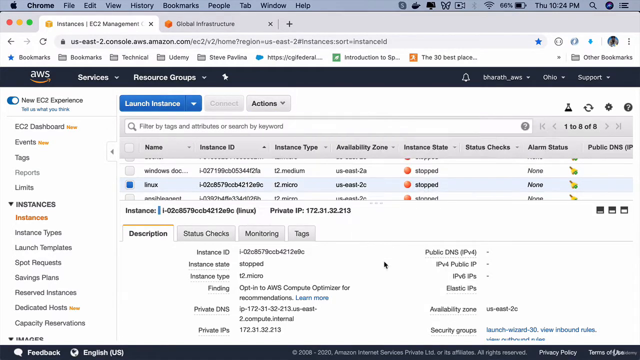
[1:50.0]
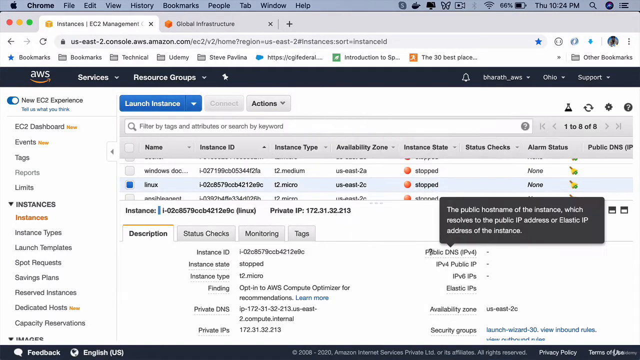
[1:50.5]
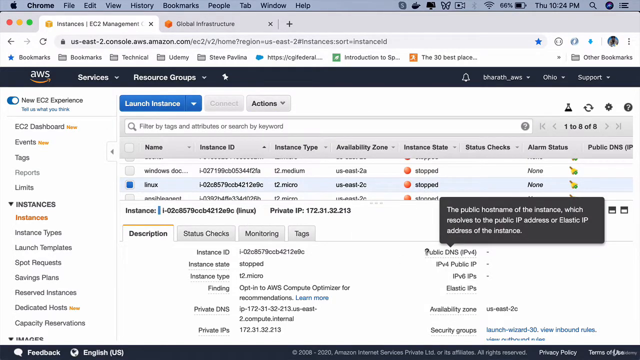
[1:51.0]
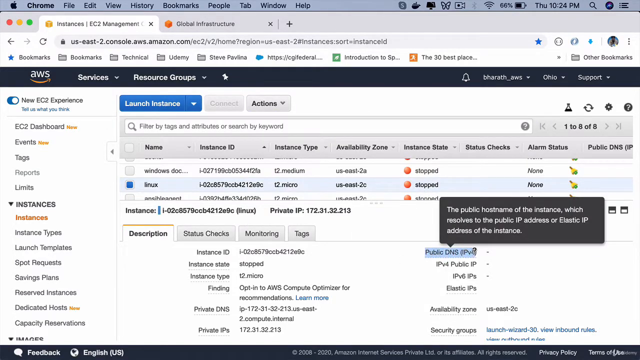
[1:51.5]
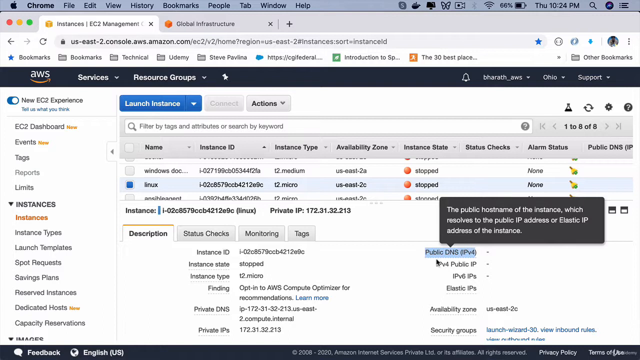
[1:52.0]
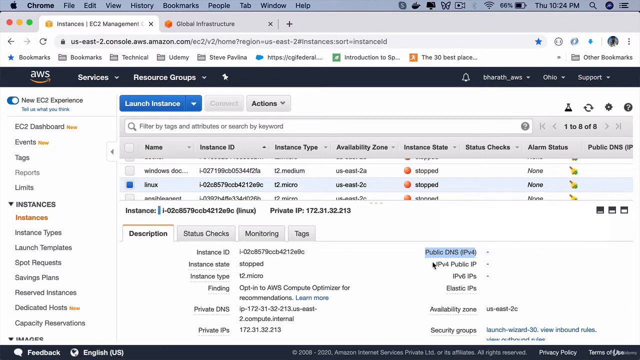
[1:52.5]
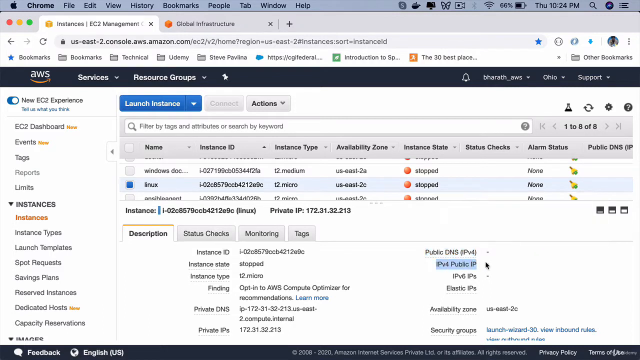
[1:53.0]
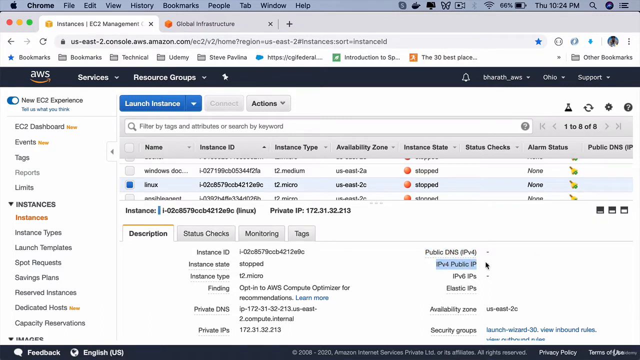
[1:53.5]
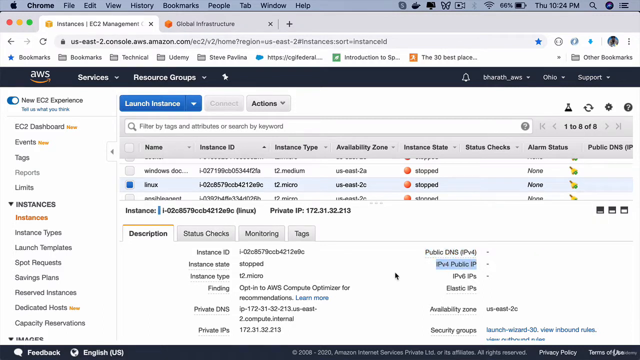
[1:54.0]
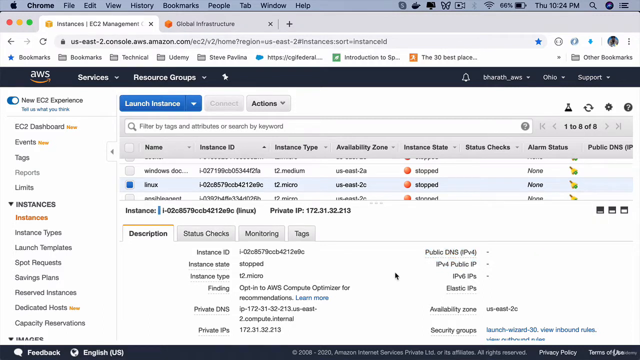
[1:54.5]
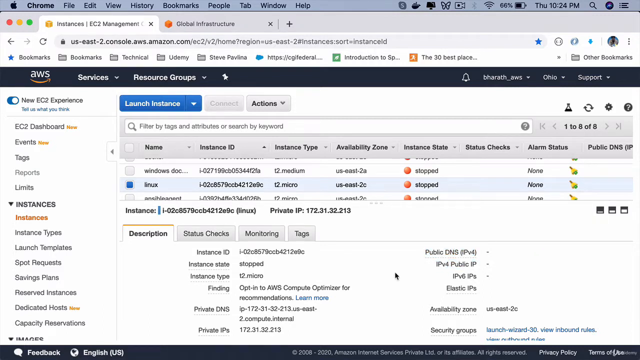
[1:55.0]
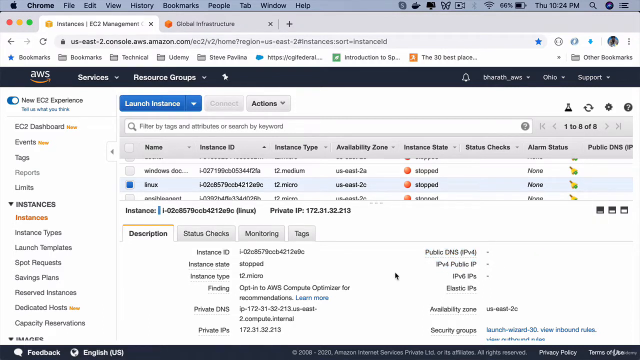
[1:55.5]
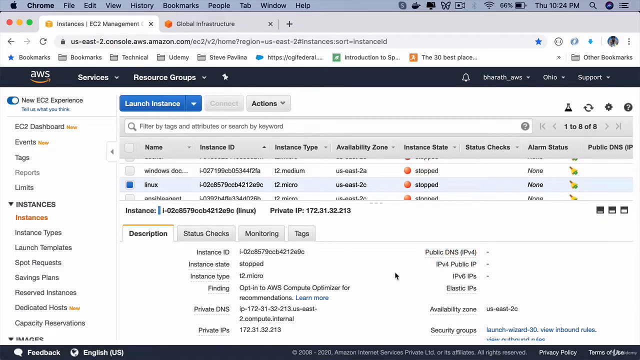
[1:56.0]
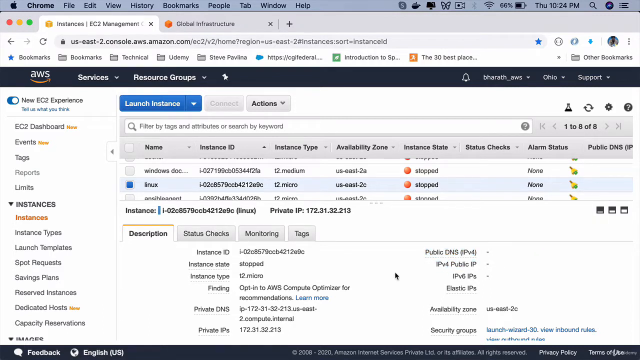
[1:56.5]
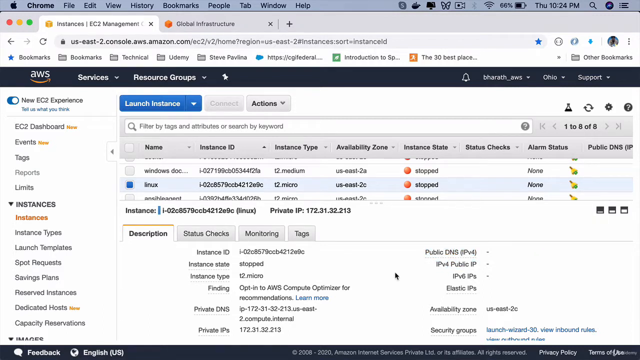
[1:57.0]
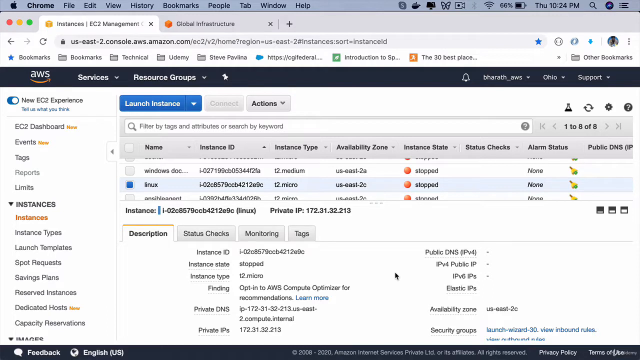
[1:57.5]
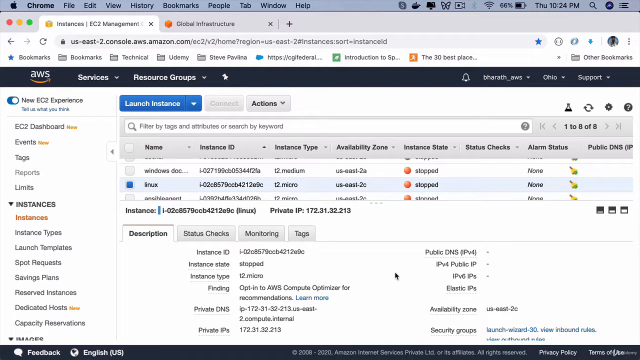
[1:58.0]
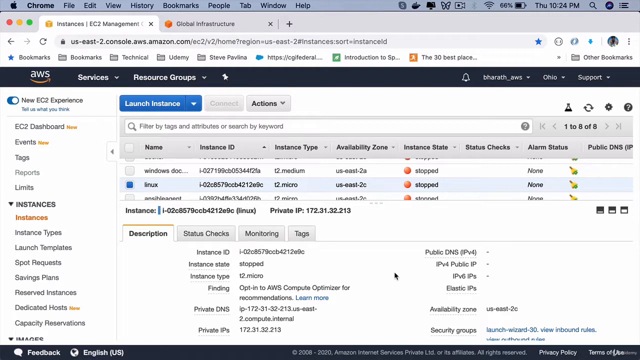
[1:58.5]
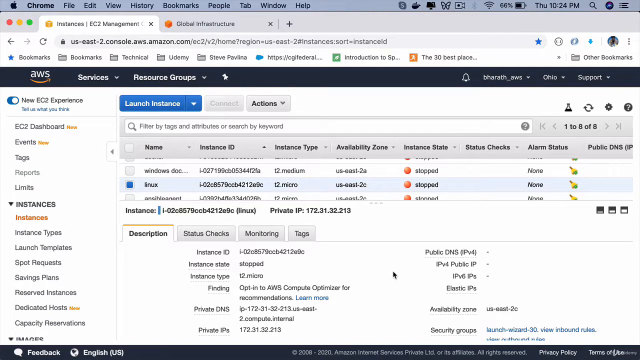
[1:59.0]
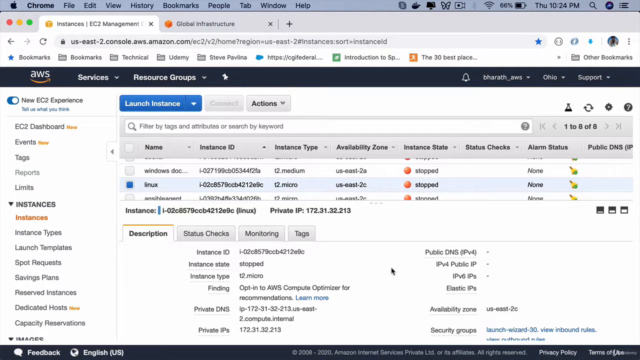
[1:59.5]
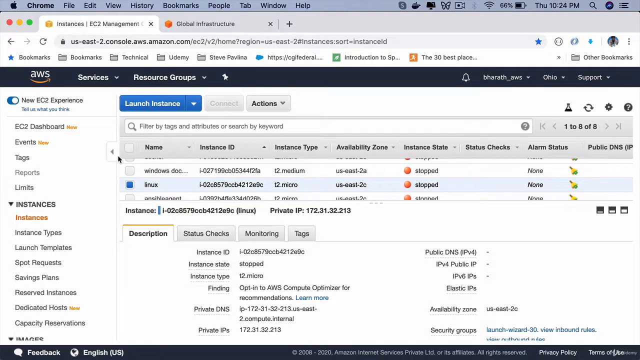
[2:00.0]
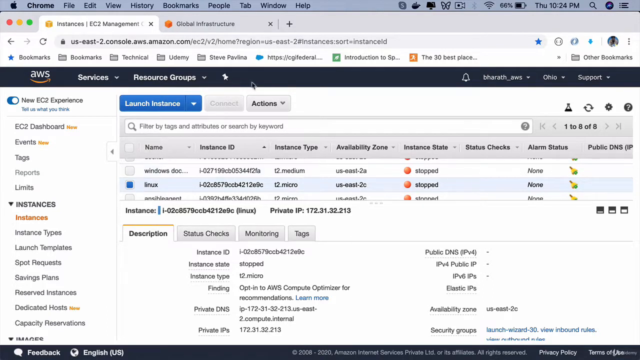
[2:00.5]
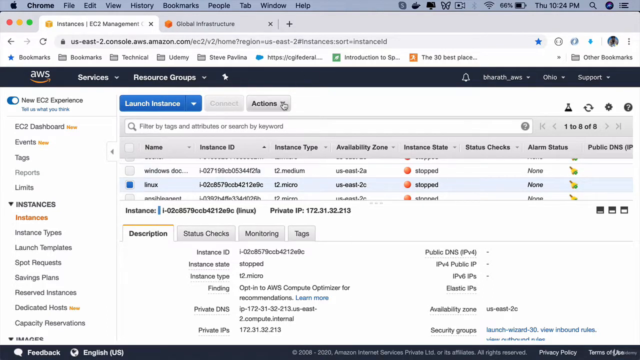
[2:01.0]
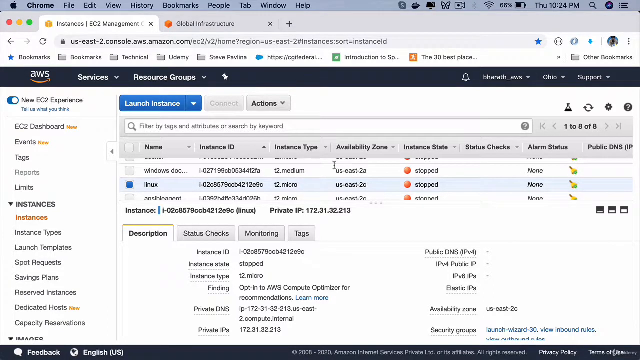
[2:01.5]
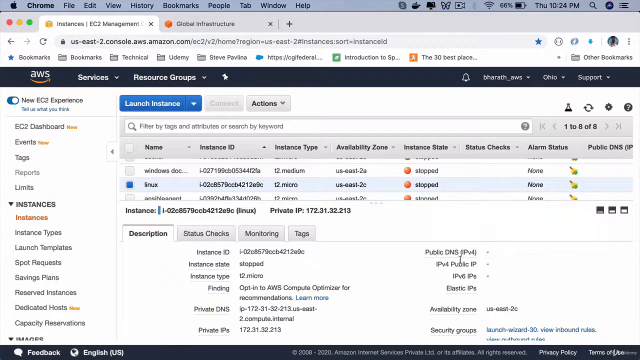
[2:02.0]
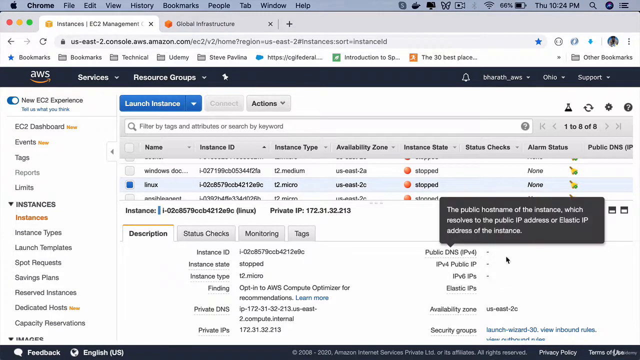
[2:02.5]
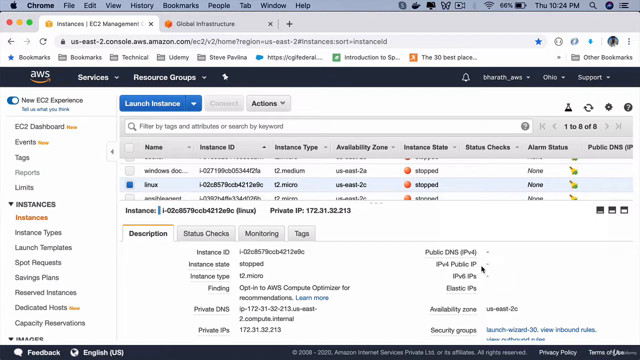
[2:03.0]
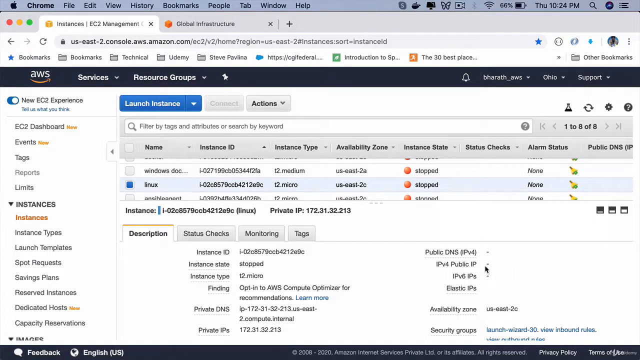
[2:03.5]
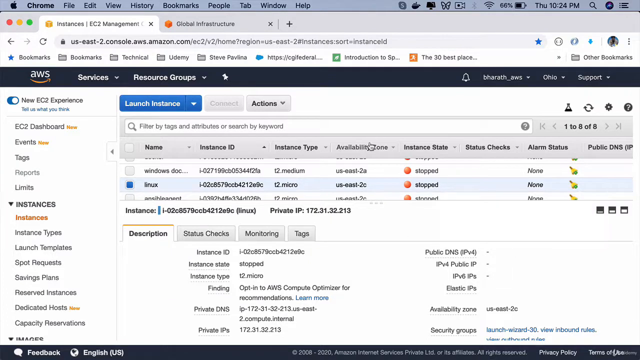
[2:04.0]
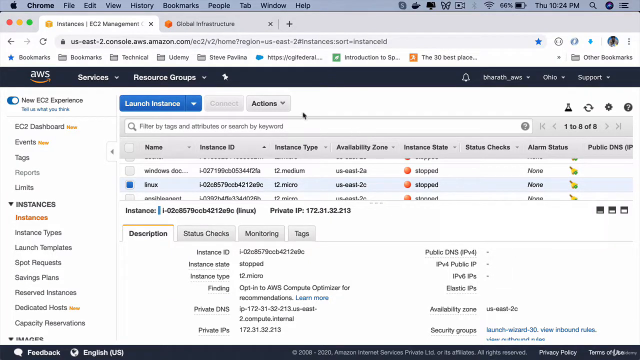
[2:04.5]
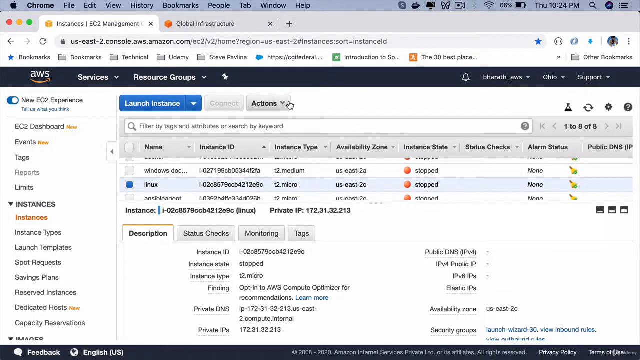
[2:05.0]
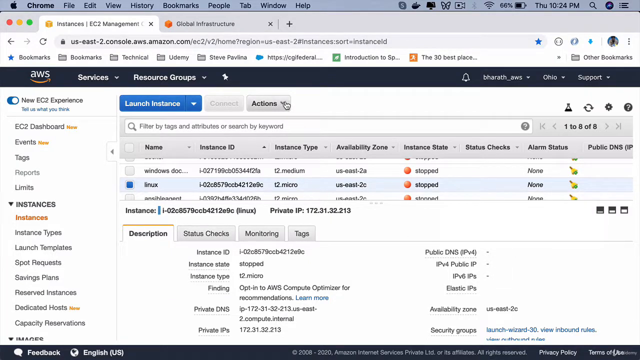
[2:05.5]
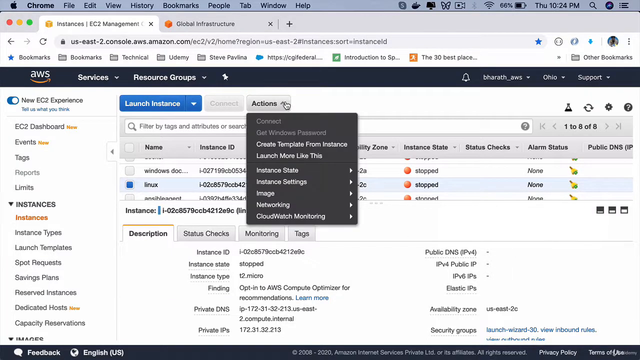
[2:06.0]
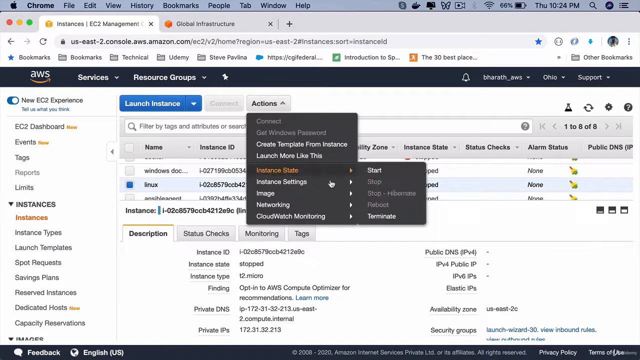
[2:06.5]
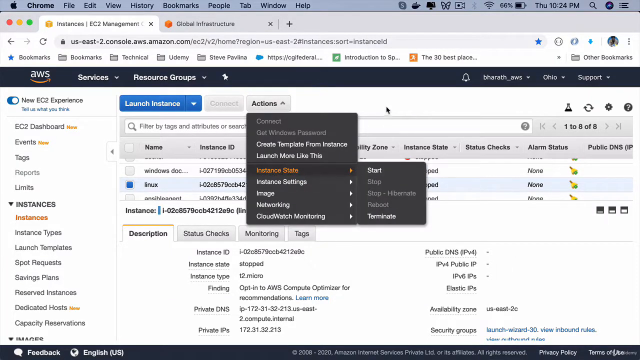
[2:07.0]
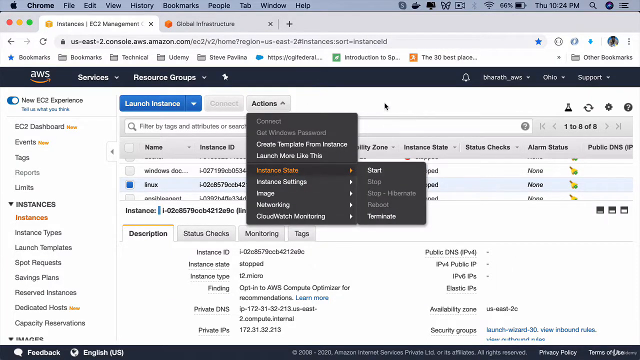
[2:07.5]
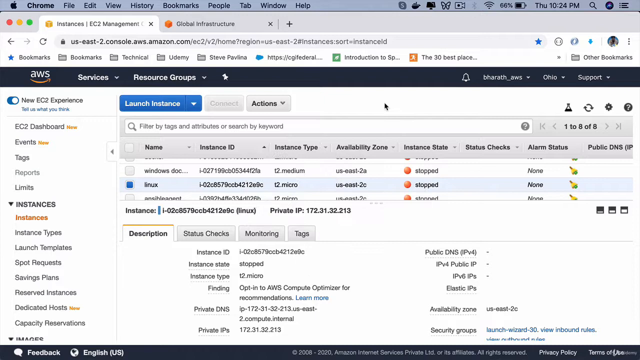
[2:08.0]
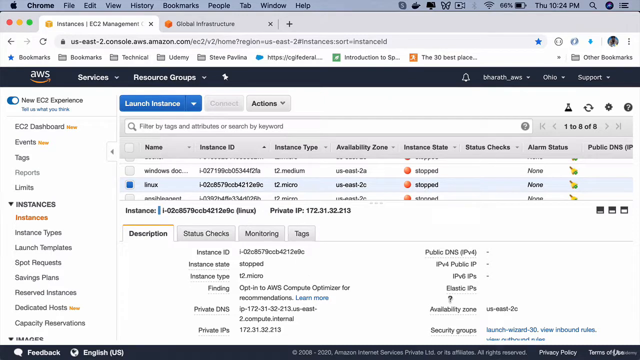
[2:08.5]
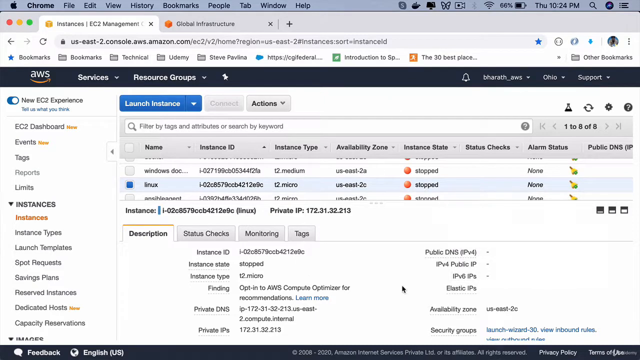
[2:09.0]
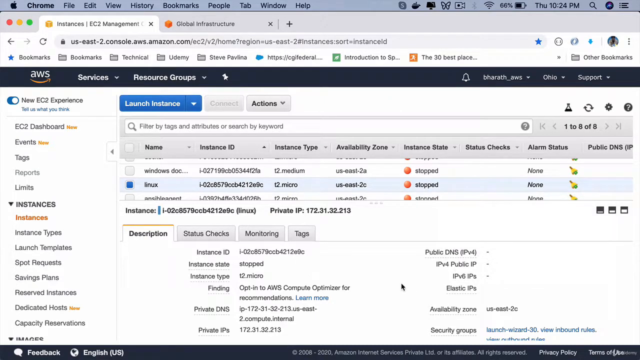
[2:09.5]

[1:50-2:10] The slightly wide video shows someone's Apple desktop. In the upper left are the Apple icon and menu bar items such as Chrome, File, Edit, View, History, Bookmarks, People, Tab, Window and Help, with icons in the upper right. Below that appears to be a web browser, with Back, Forward and Reload buttons and a filled-in address bar. The website is Amazon Web Services: in its upper left-hand corner is "AWS" with the Amazon smile, followed to the right by "Services" and then "Resource Groups". On the left-hand side is a vertical toolbar of Amazon service options: "New EC2 Experience" at the top, then "EC2 Dashboard", "Events", "Tags", "Reports", "Limits" and an "Instances" dropdown, which is expanded to show "Instances", "Instance Types", "Launch Templates", "Spot Requests", "Savings Plan" and "Reserve Instances".